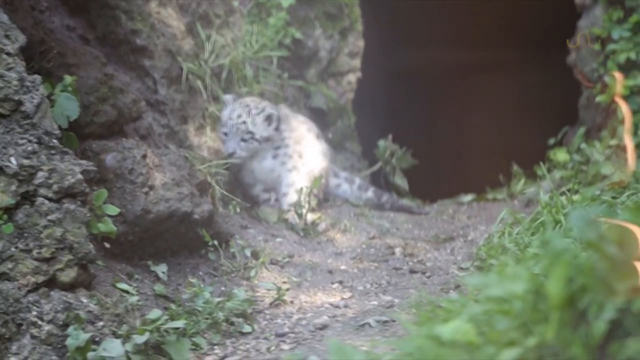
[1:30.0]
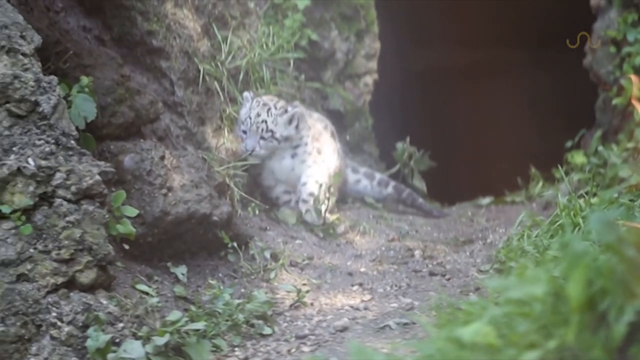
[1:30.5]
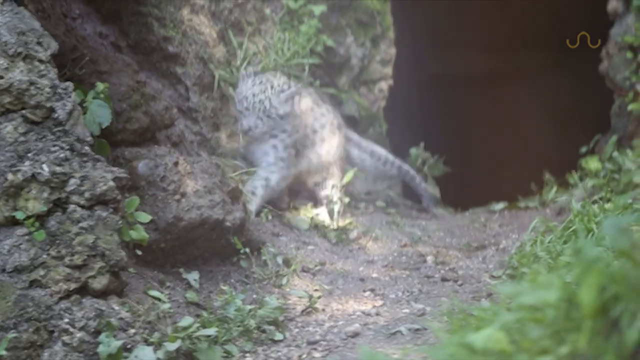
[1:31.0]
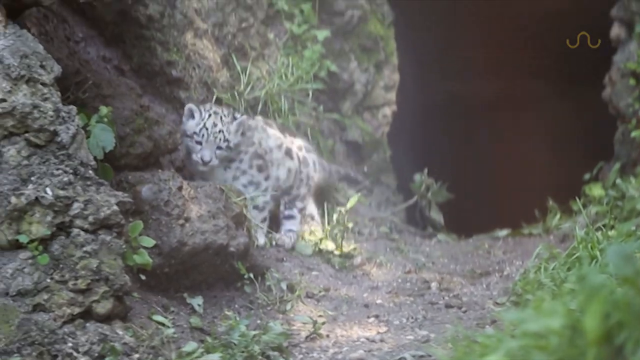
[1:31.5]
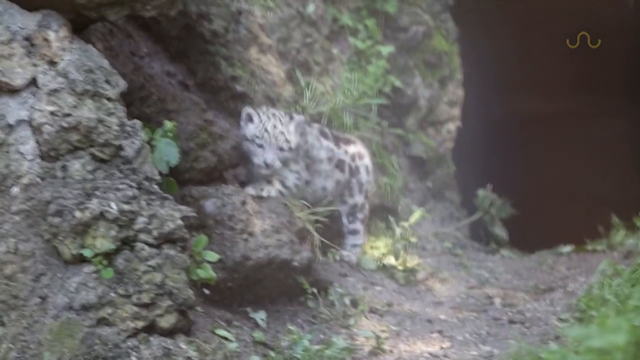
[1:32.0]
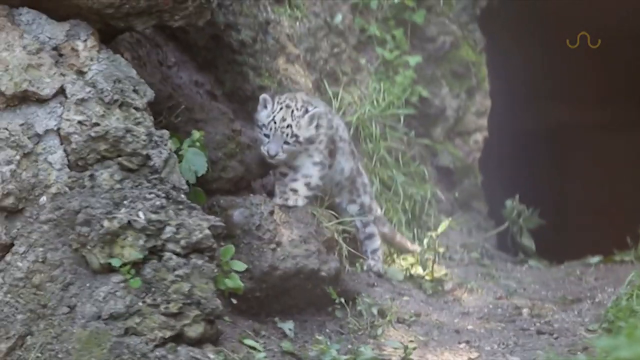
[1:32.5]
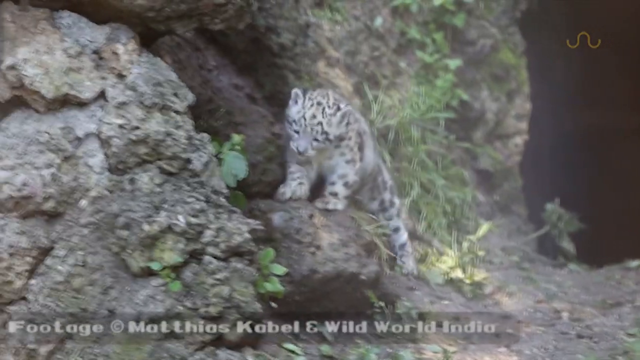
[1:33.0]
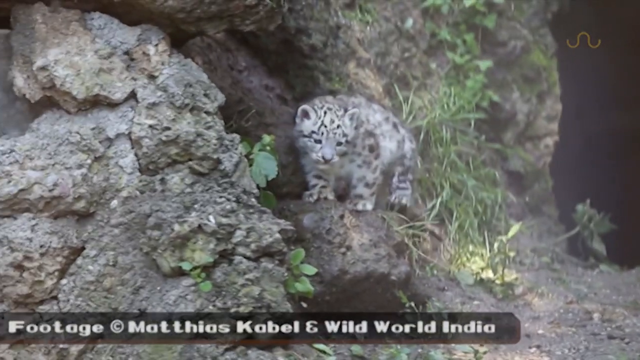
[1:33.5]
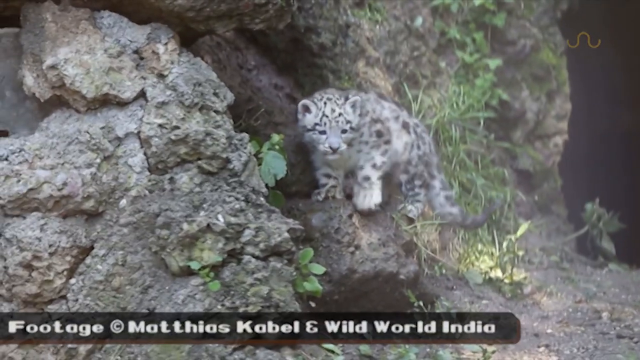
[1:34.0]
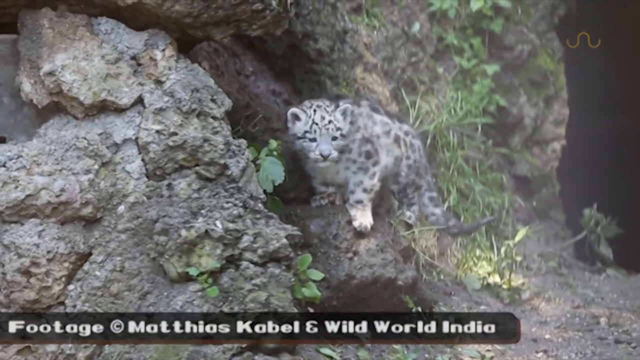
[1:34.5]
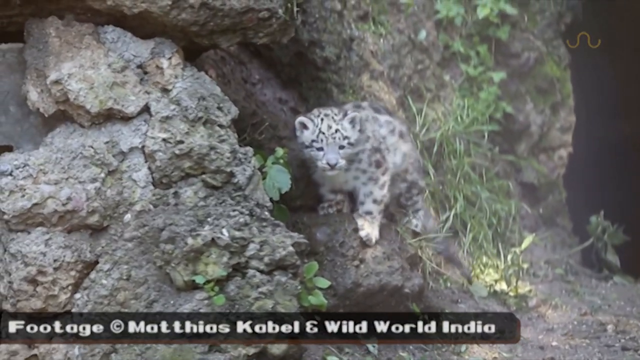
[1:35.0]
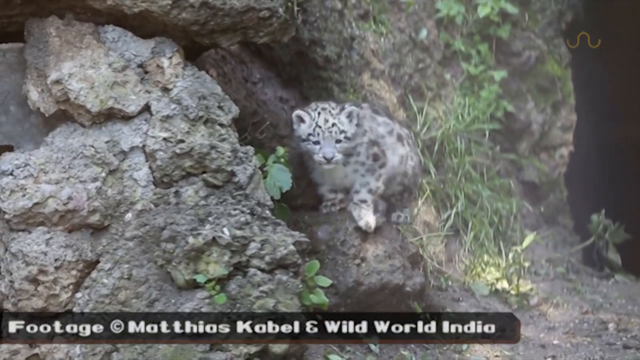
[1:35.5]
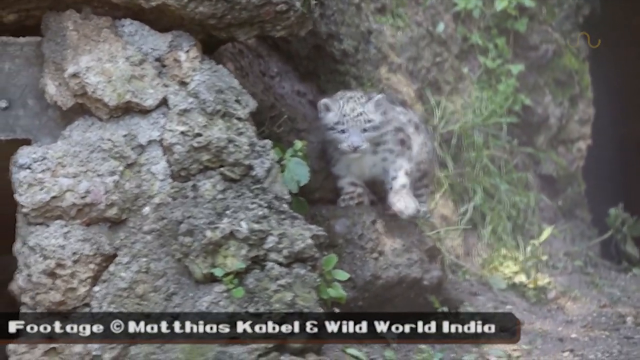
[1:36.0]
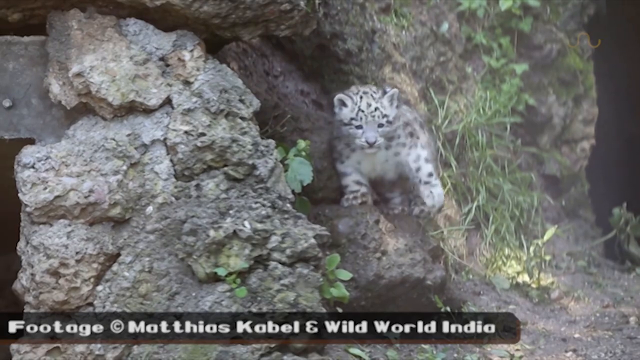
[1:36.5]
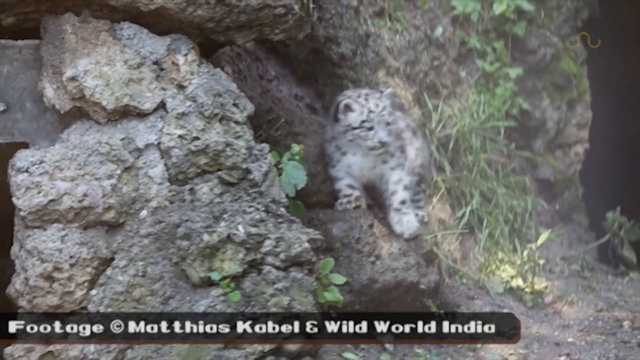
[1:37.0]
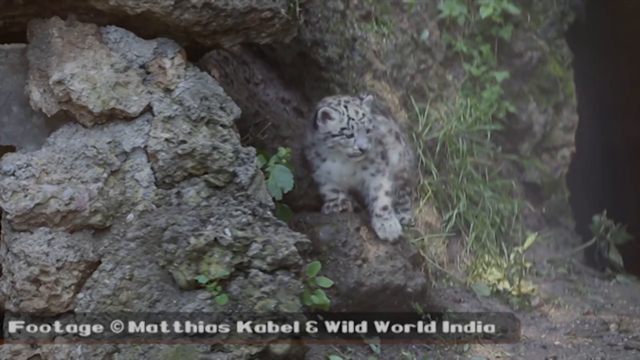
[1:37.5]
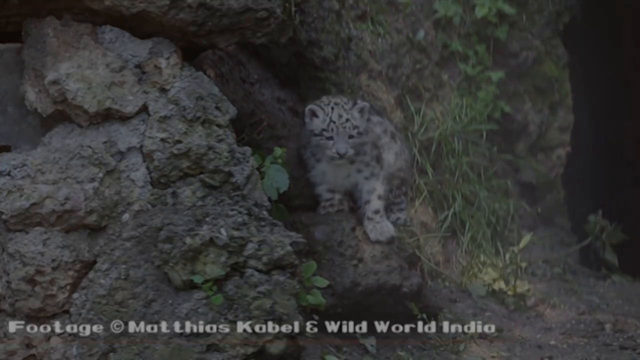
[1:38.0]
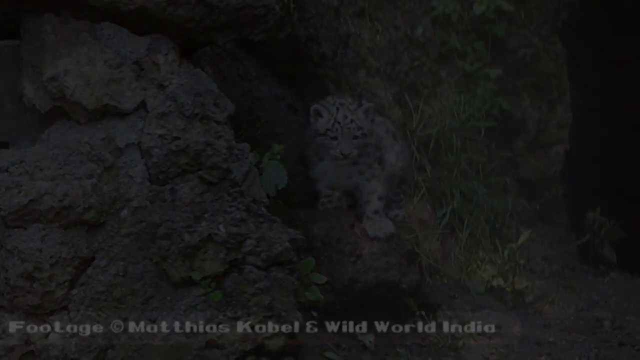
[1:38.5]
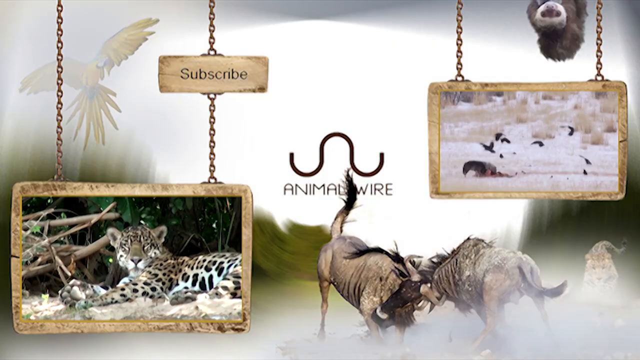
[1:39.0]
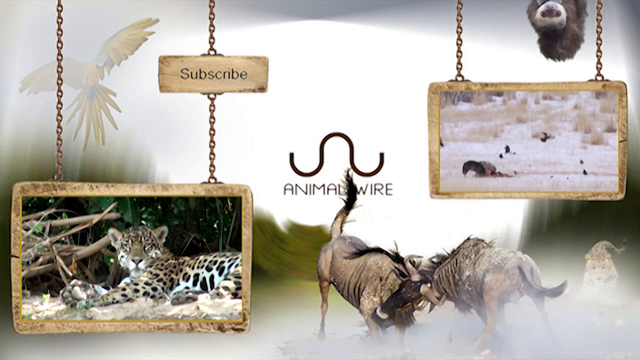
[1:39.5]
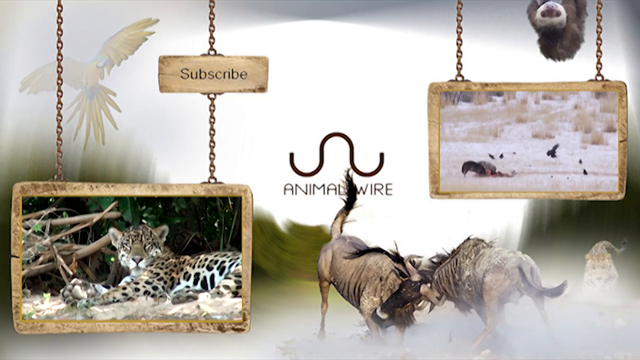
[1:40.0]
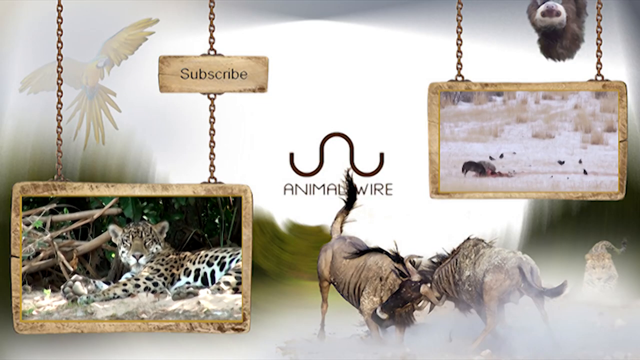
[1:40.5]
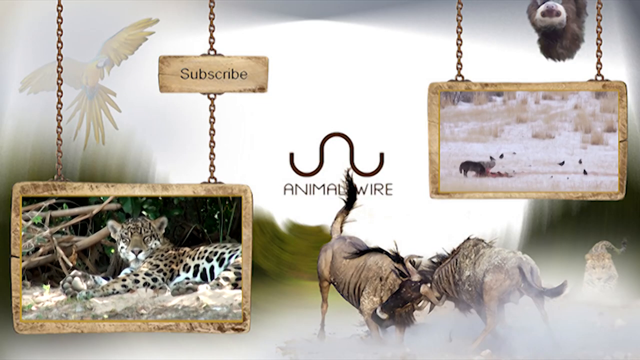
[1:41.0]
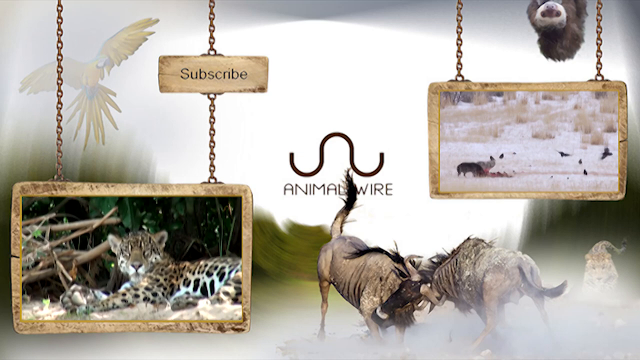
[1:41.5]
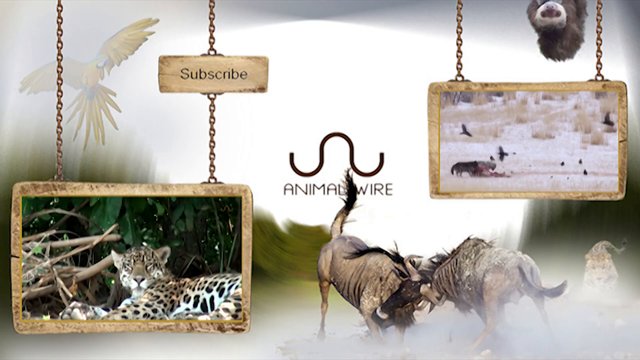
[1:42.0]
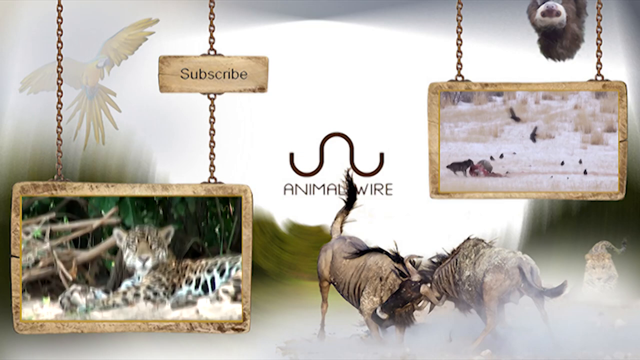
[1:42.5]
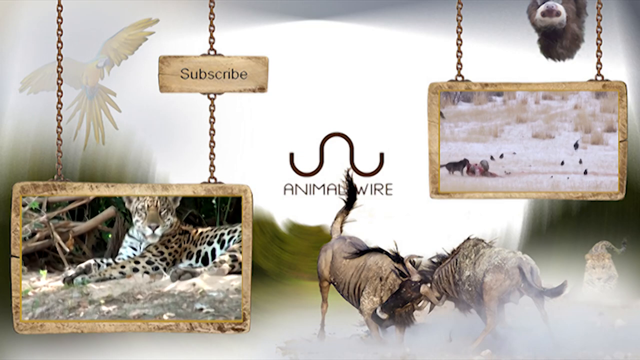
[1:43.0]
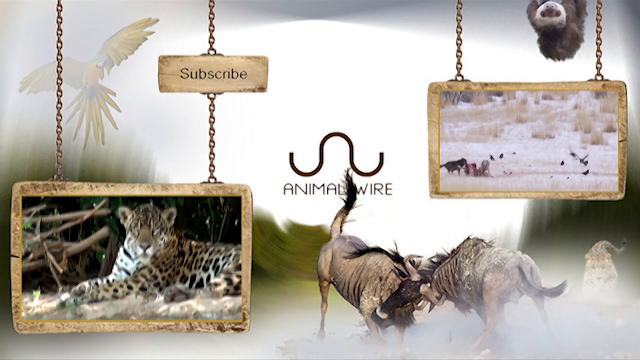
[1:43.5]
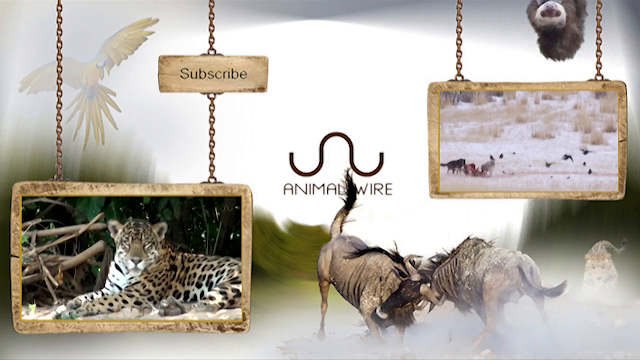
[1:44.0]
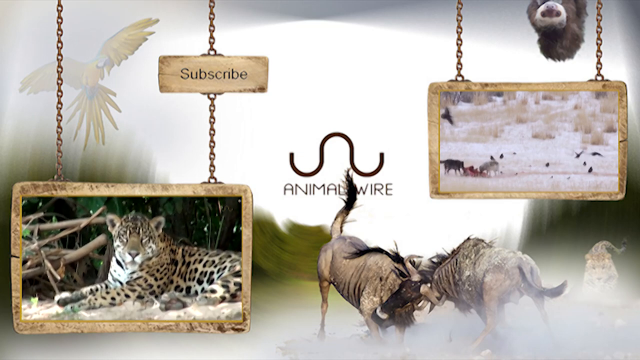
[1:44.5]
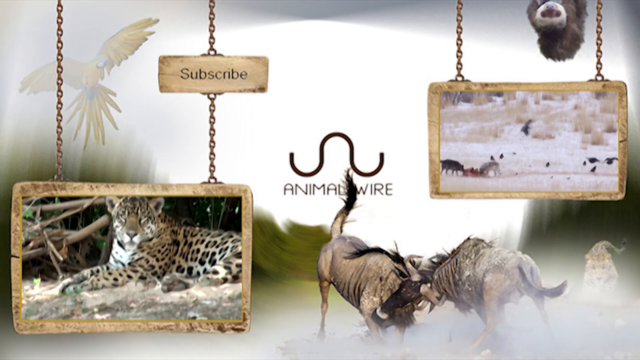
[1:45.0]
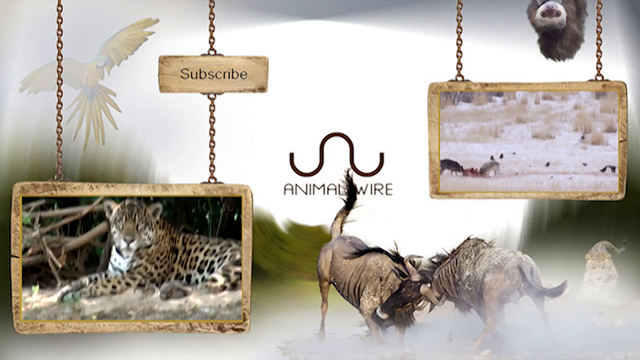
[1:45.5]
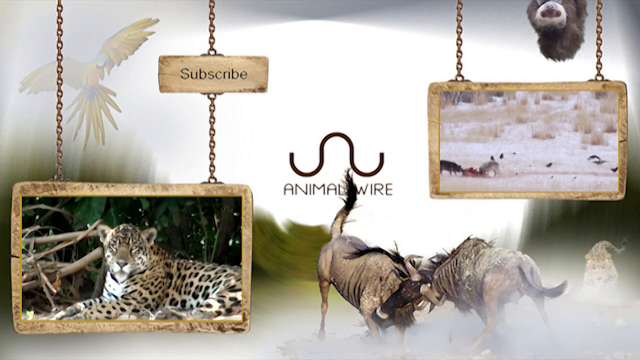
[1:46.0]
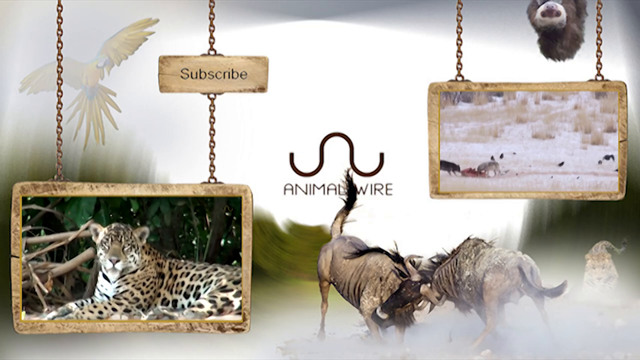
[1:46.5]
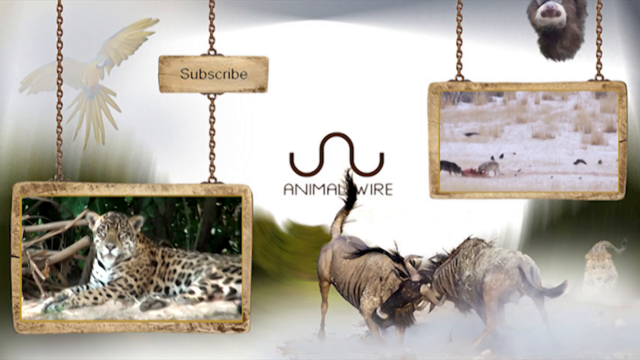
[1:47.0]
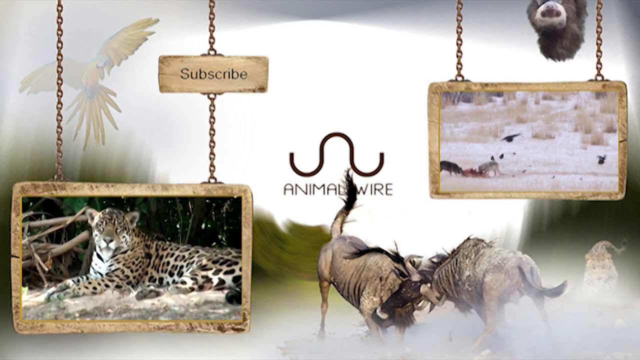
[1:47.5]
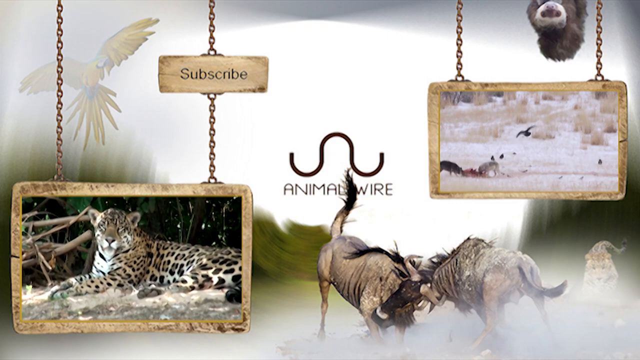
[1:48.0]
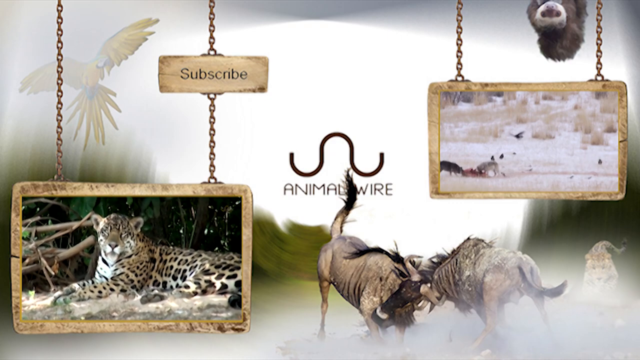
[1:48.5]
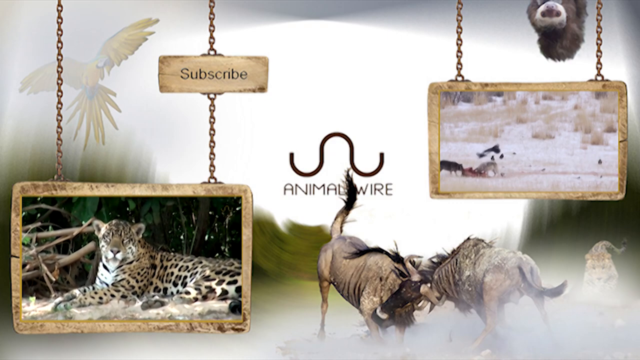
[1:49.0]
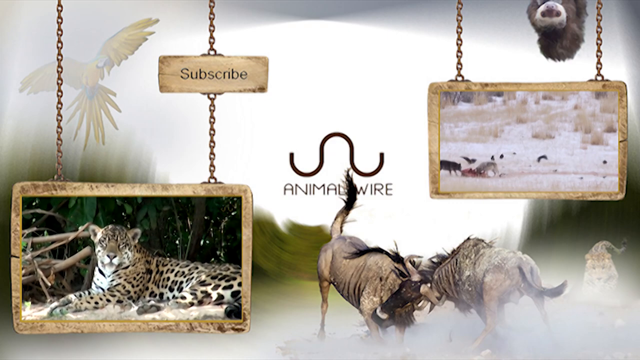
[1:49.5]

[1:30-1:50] A baby snow leopard climbs on a rock; it has toe beans like a little kitty. Then the screen says "Animal Wire, subscribe," with a subscribe button and two other videos shown in the frame that can be clicked to watch; one of them looks like it features a regular leopard.